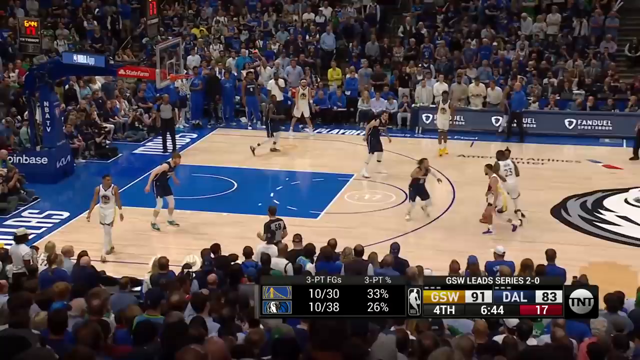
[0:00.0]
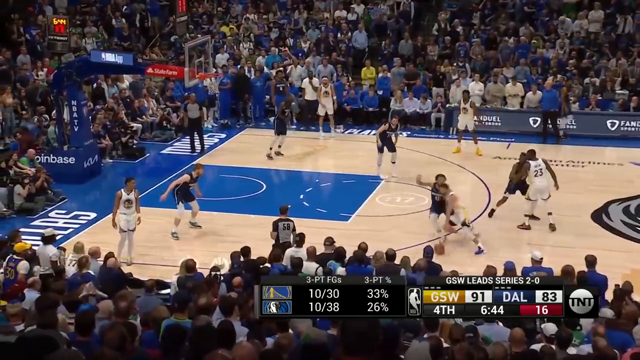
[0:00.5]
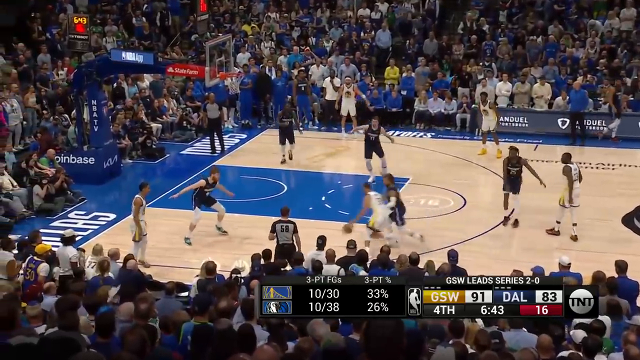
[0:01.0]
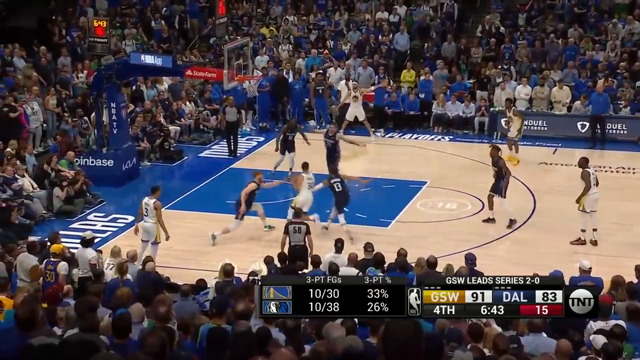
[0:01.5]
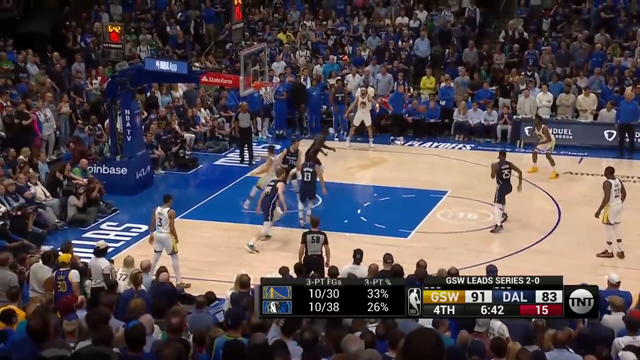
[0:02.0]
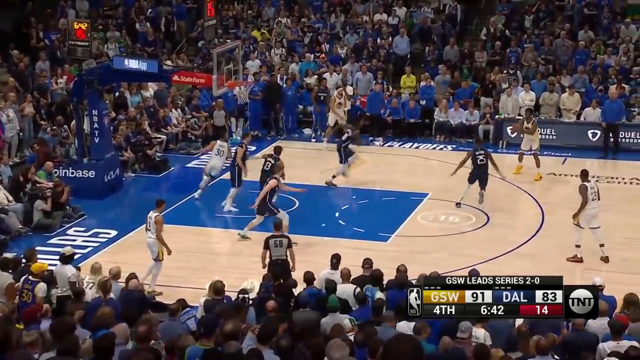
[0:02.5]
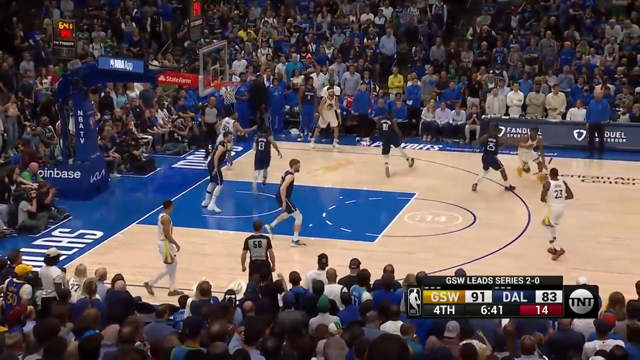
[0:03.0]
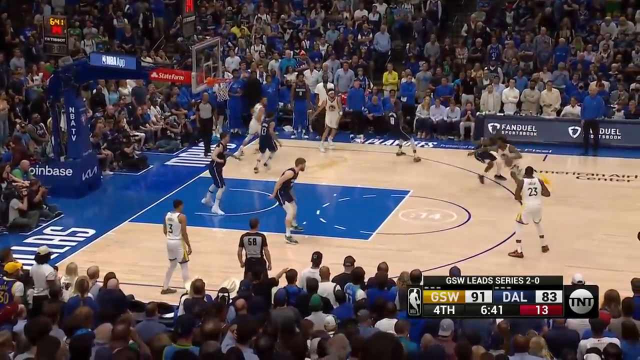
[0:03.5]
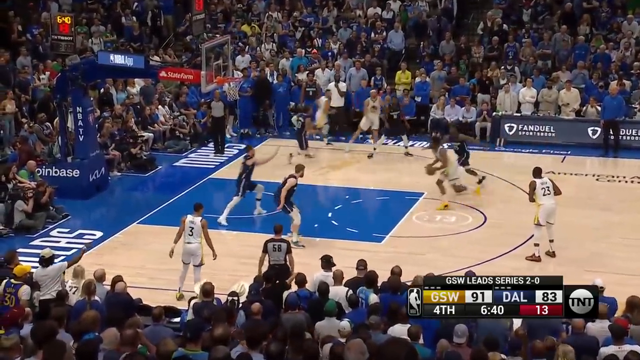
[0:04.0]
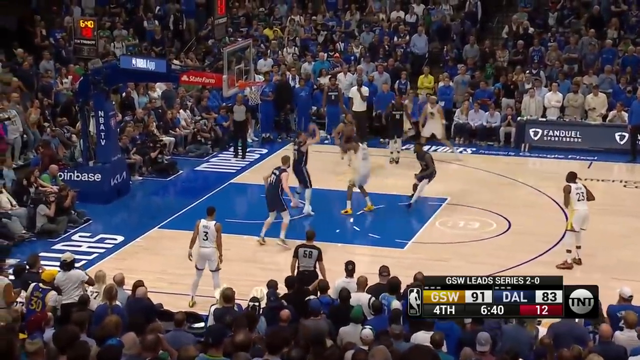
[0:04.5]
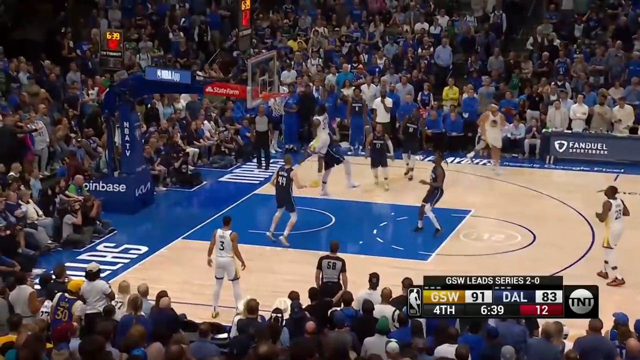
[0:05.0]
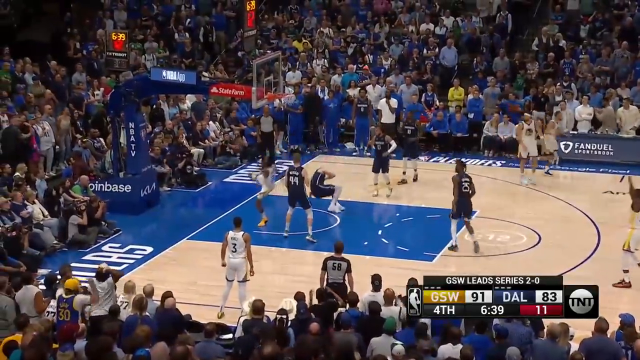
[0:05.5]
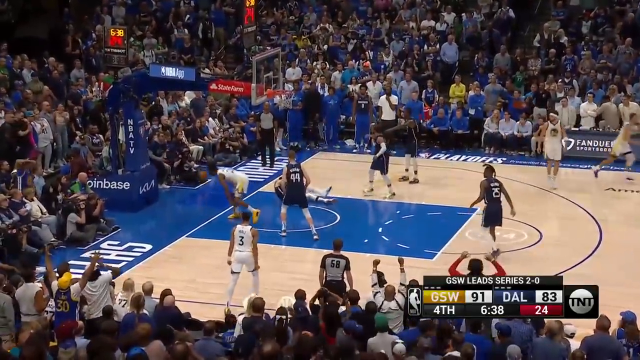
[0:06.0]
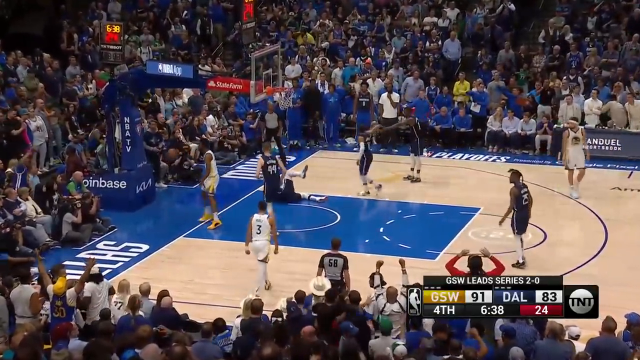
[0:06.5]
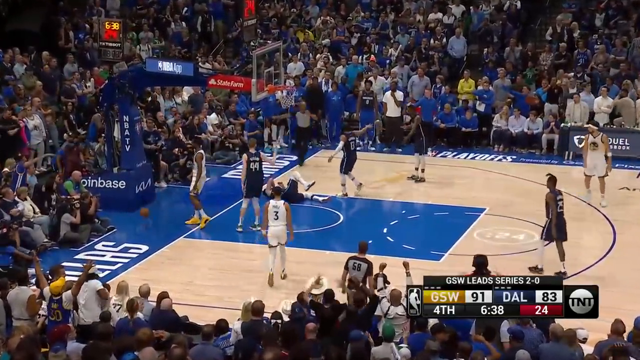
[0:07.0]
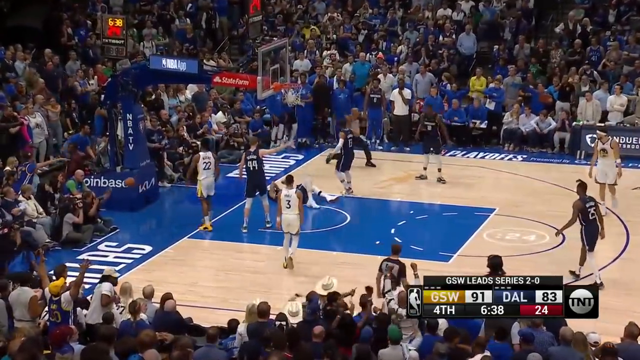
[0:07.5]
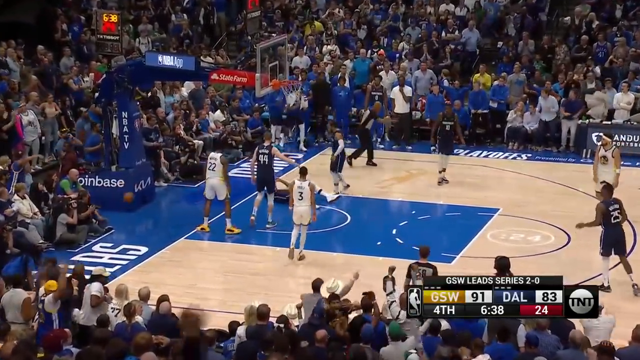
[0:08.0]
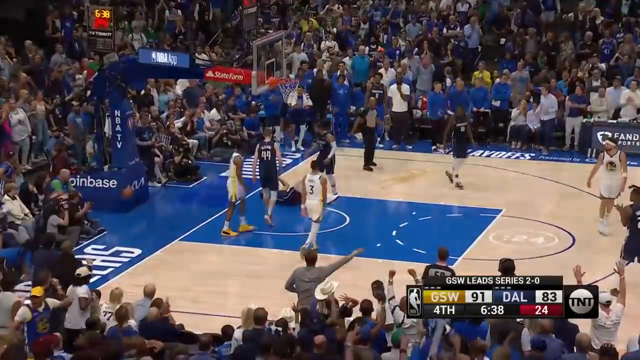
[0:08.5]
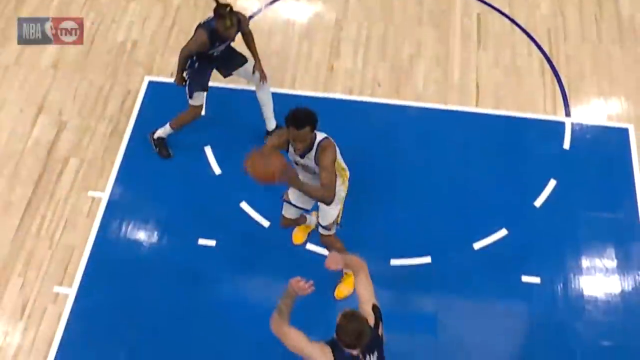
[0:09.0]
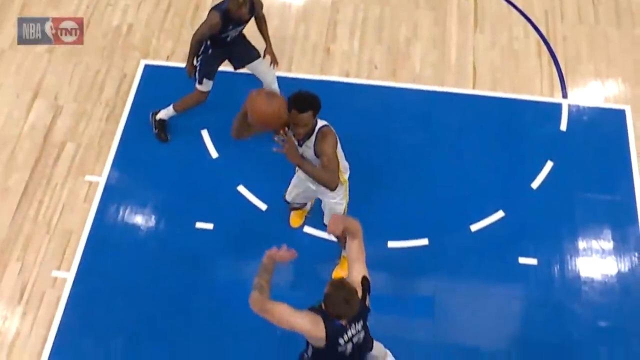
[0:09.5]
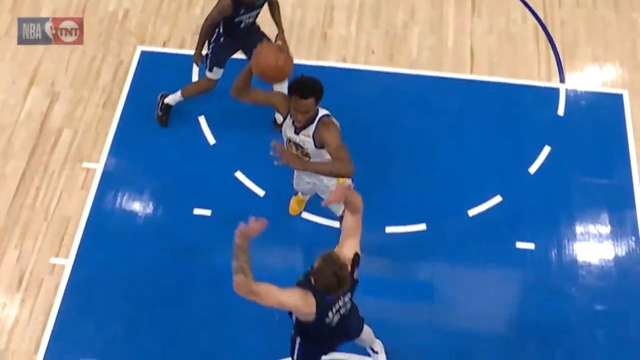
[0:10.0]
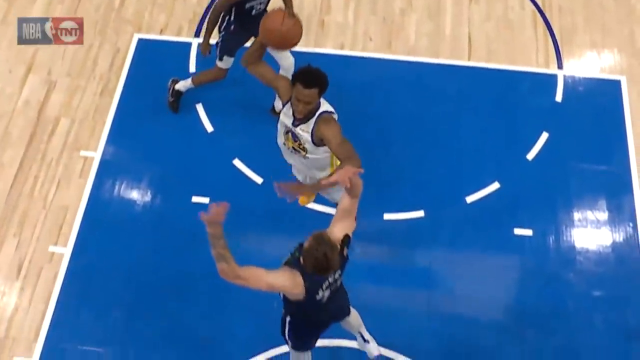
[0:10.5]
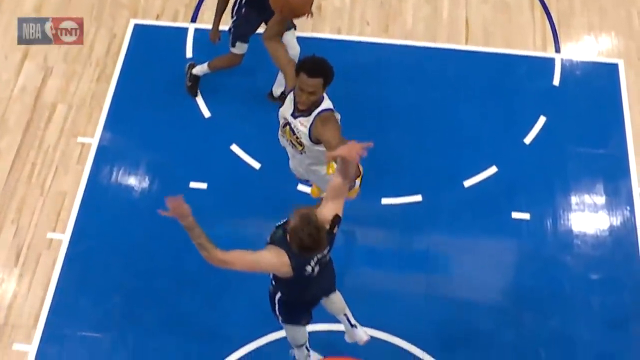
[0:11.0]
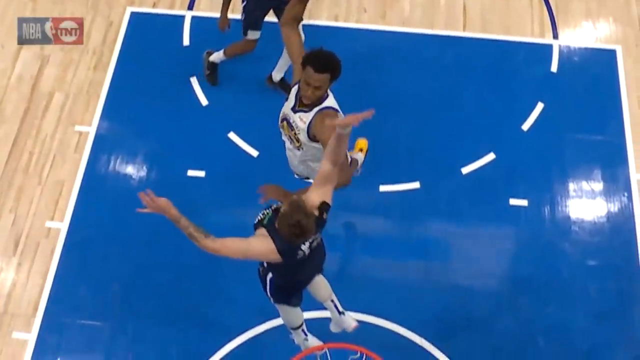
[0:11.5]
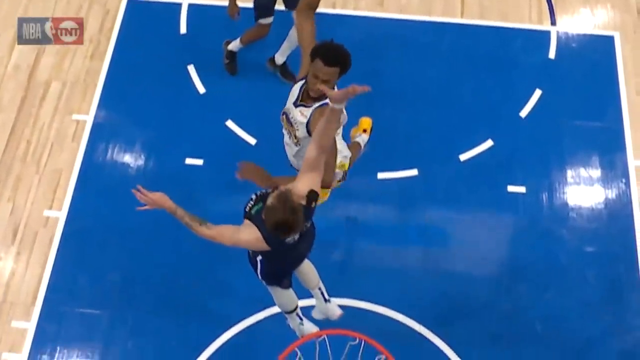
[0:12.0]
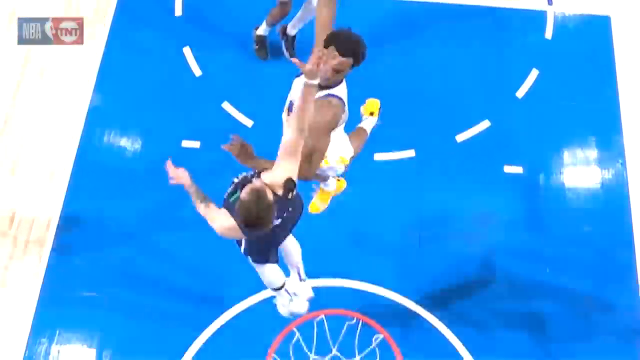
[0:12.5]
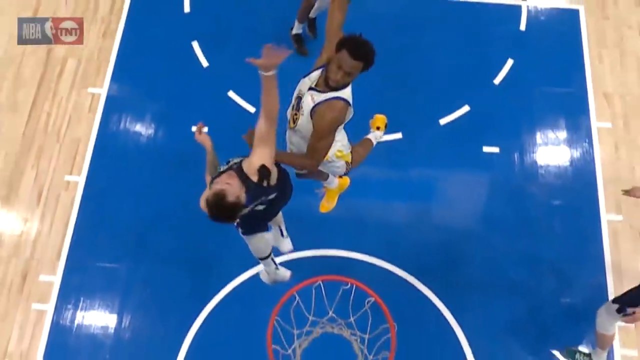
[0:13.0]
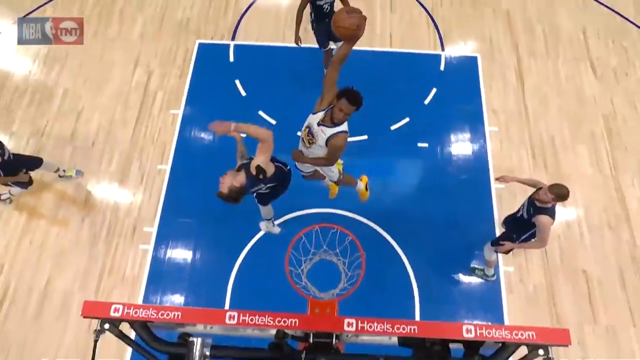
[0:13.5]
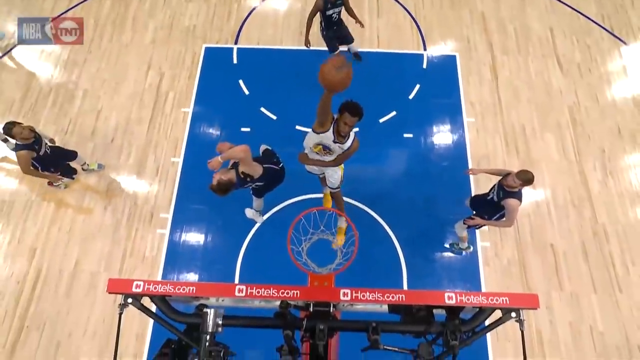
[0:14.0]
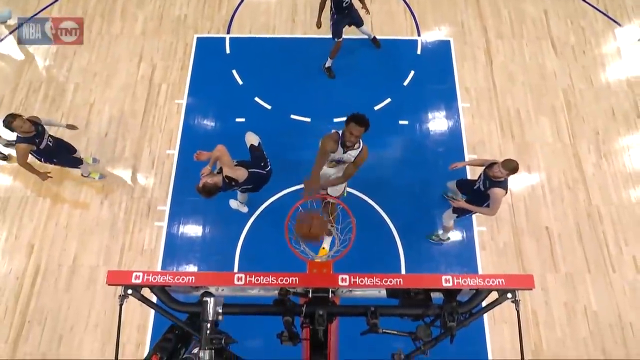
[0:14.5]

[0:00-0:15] The video is from an NBA game between the Golden State Warriors and the Dallas Mavericks. Steph Curry kicks the ball out to Andrew Wiggins, who dribbles around a defender, leaves from the top of the key, and throws down a monstrous dunk over the defender, who appears to be Luka Doncic. The defender lands on his back and seems hurt. The play is then shown again in slow motion. After the dunk the score is Golden State 91, Dallas 83.